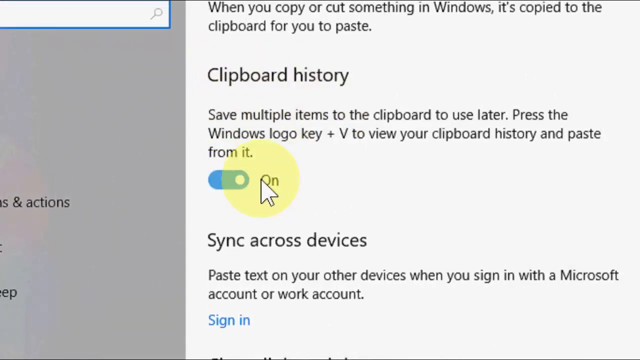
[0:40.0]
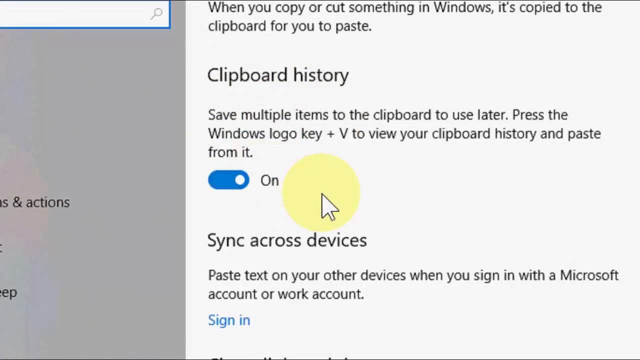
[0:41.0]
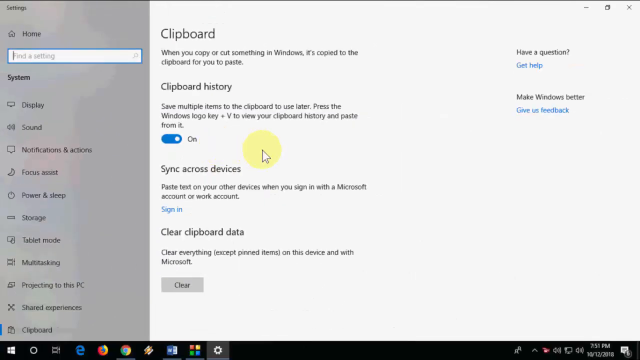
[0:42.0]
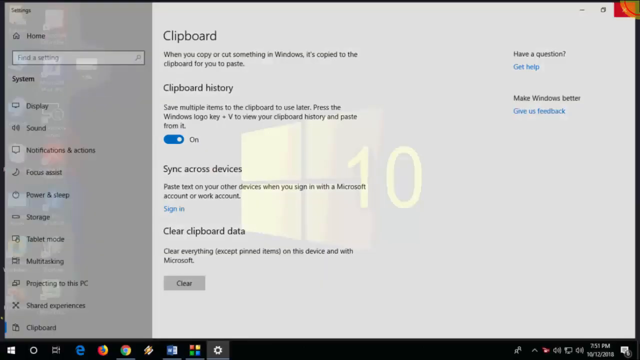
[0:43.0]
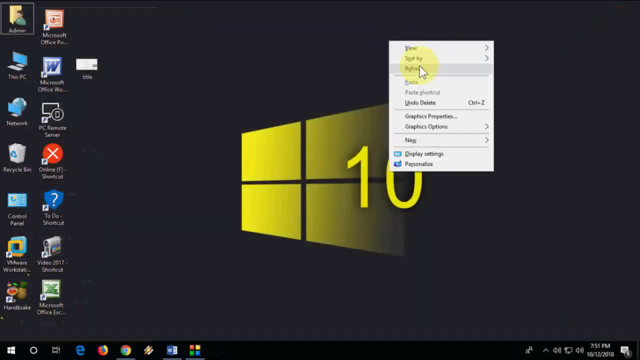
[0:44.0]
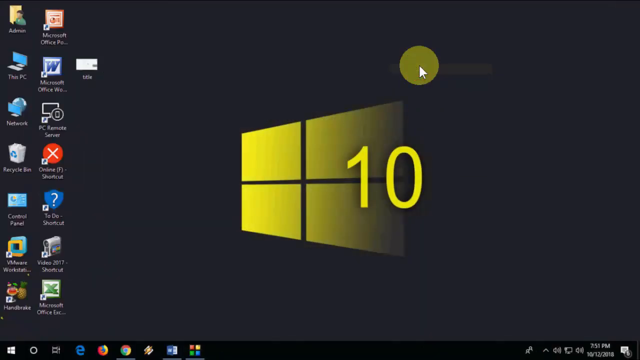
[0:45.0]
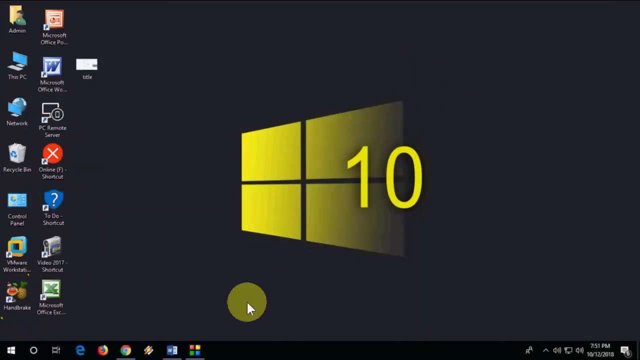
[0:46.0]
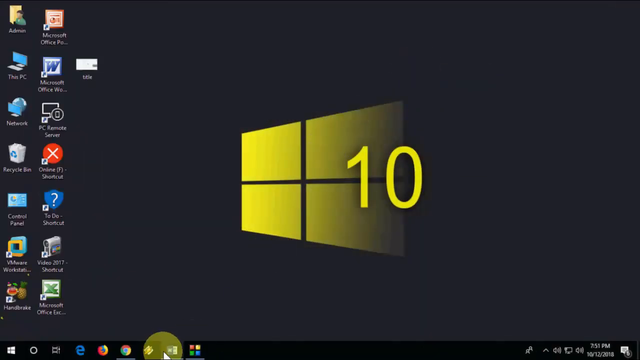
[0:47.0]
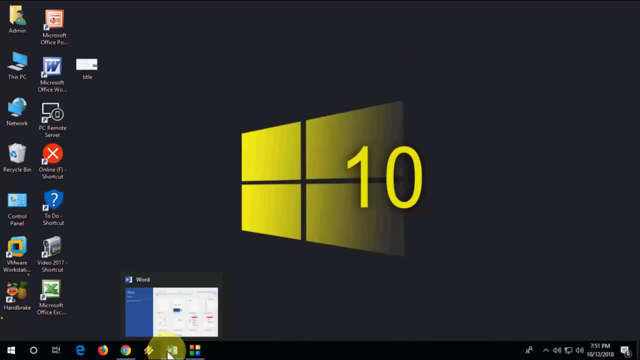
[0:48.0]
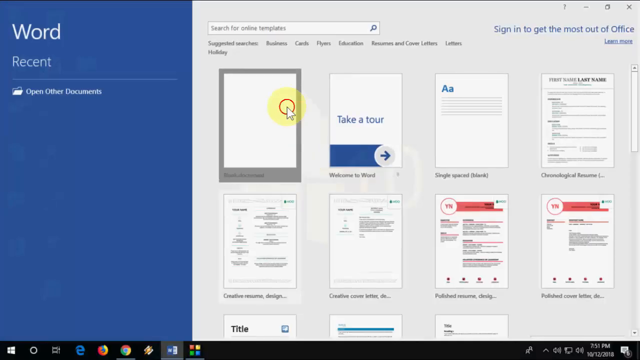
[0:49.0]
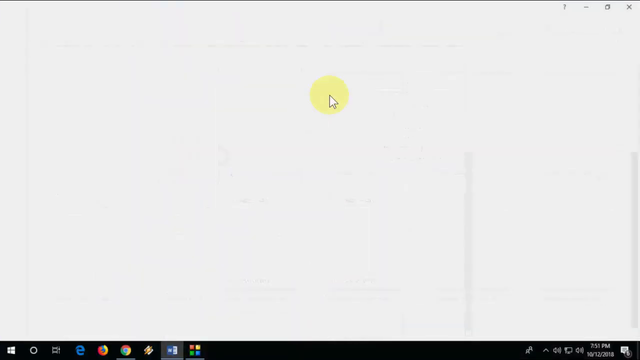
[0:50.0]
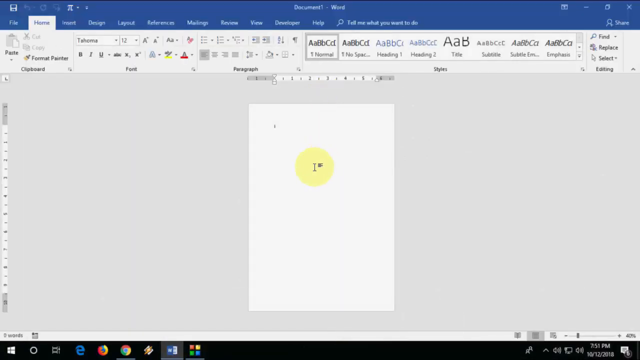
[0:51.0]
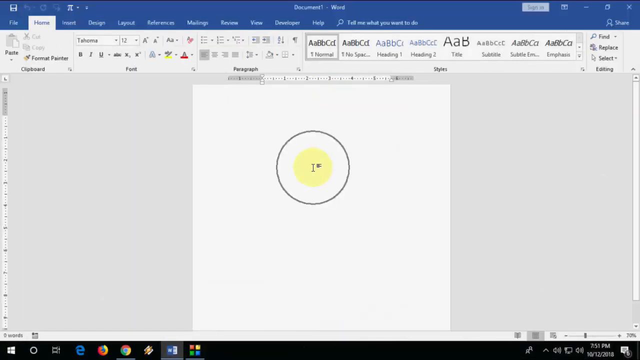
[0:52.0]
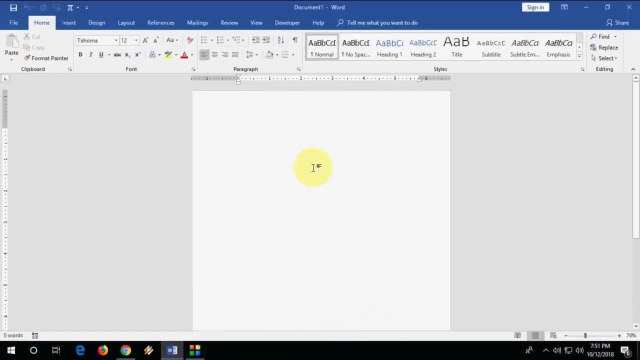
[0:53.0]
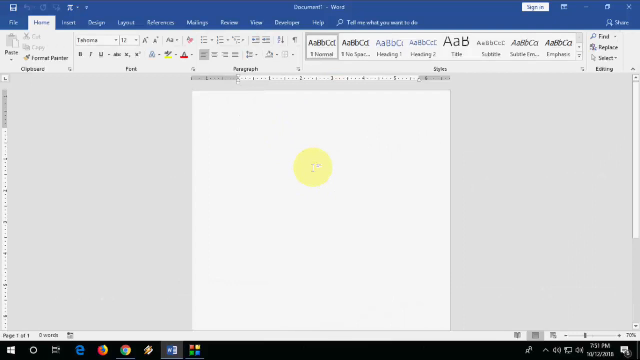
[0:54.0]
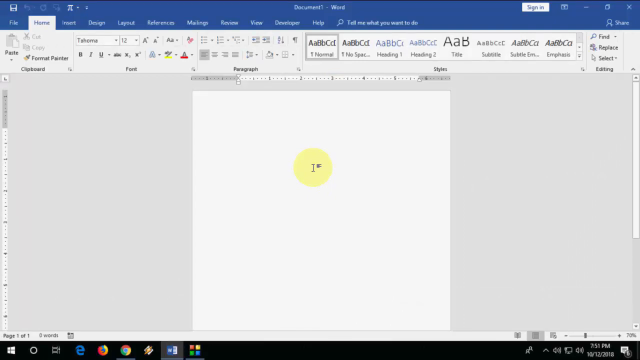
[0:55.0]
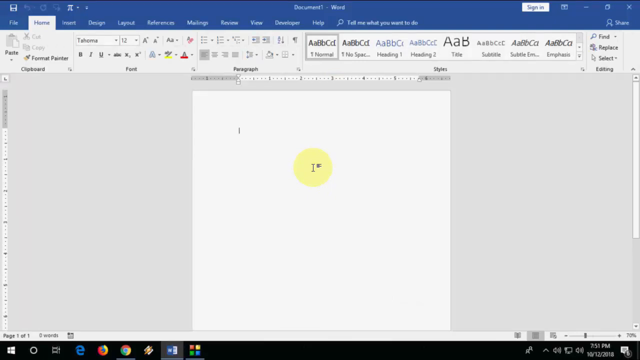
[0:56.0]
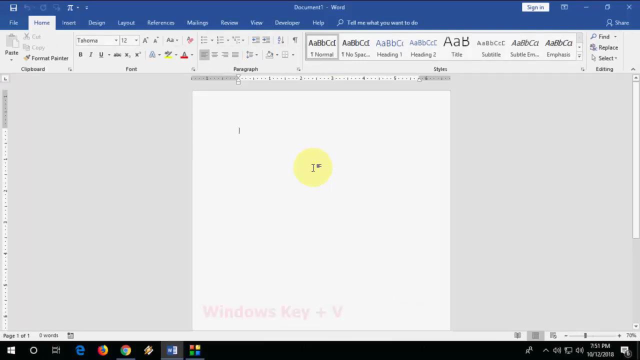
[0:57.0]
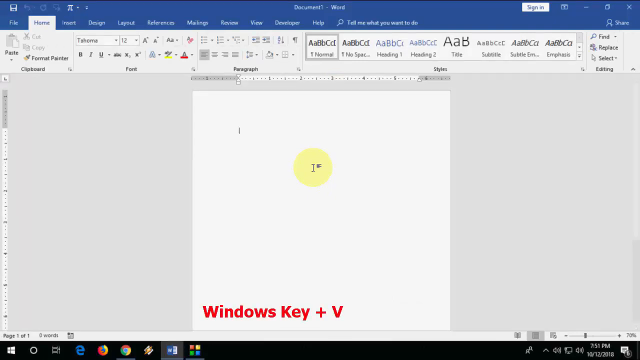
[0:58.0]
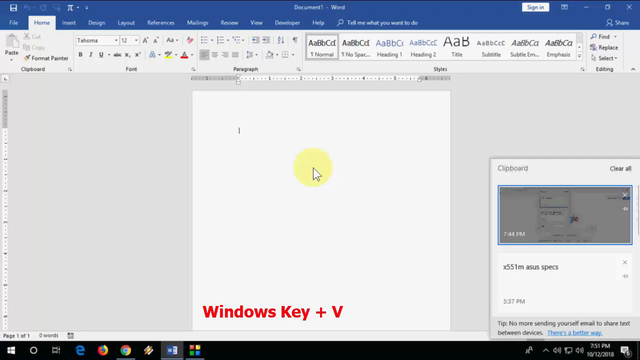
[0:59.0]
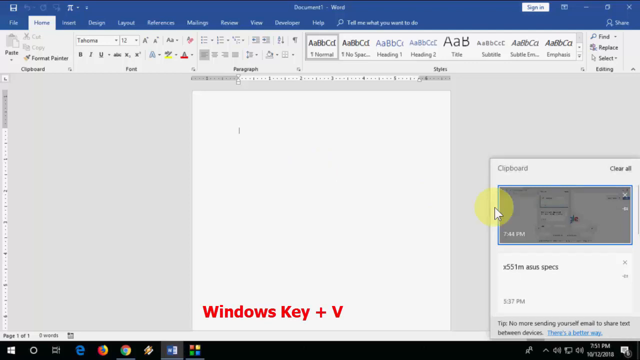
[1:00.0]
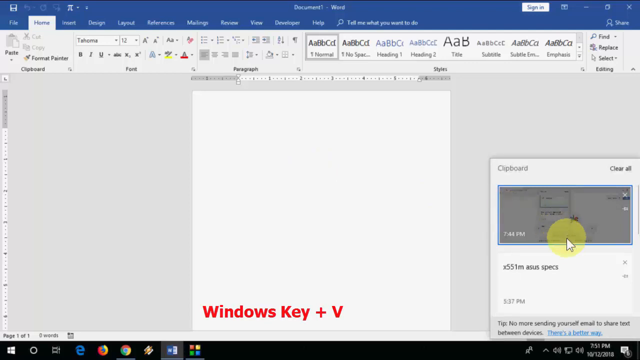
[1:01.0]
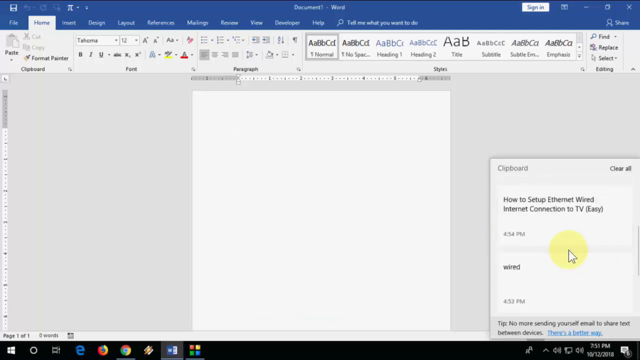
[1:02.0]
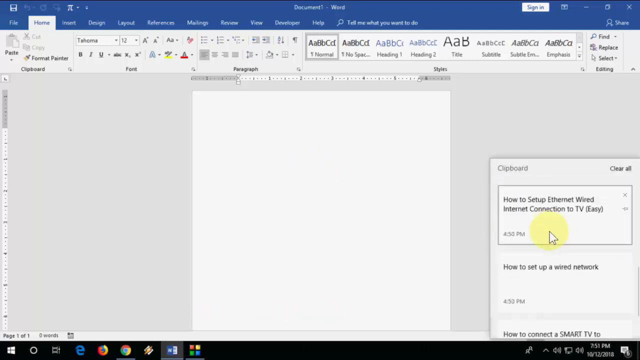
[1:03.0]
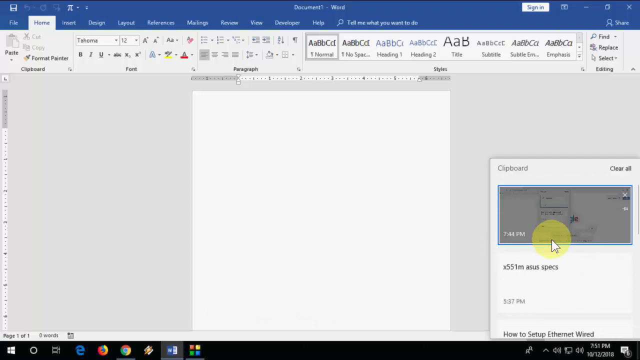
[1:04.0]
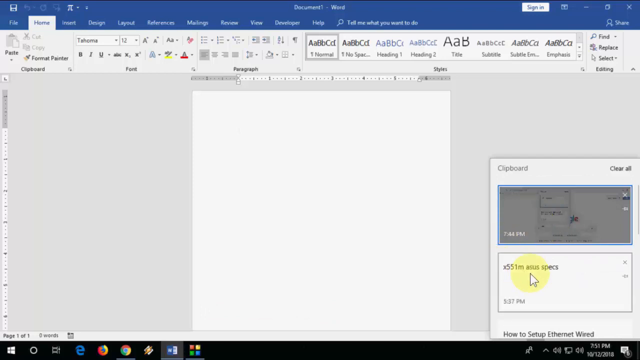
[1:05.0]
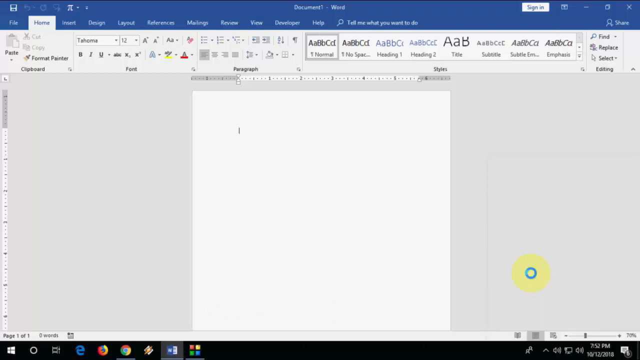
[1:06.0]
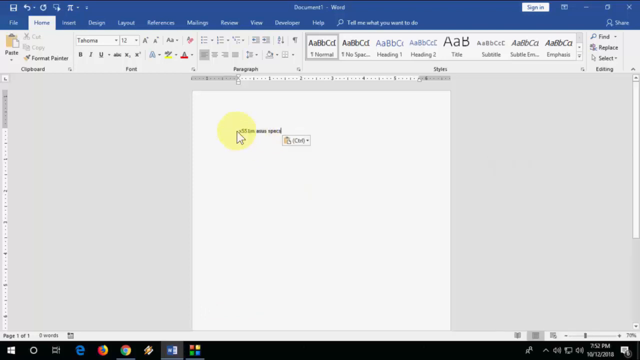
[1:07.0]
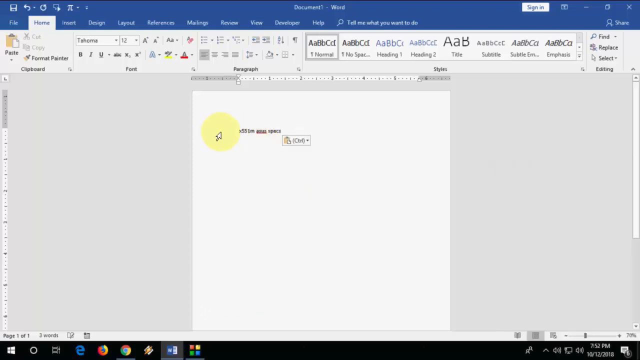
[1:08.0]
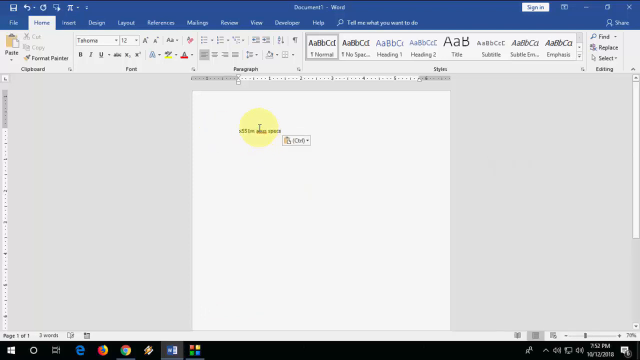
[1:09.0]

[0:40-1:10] The view zooms out away from the clipboard history setting, navigates back to the Windows desktop and opens the Microsoft Word application. In a Word document, some text is pasted using Windows key plus B, showing that clipboard history is active and can be used inside Word. A few different items from the clipboard history are then pasted into Word, with the cursor showing that they pasted properly and that there are multiple items in the clipboard history. There are no physical subjects in this part of the video.